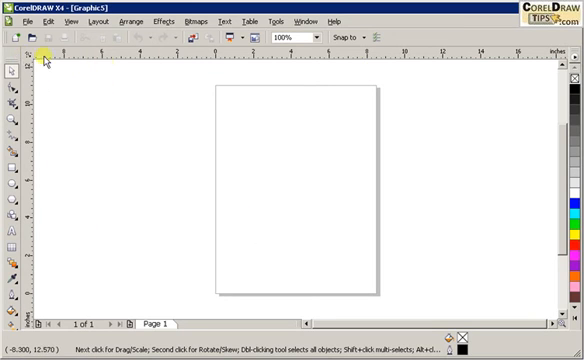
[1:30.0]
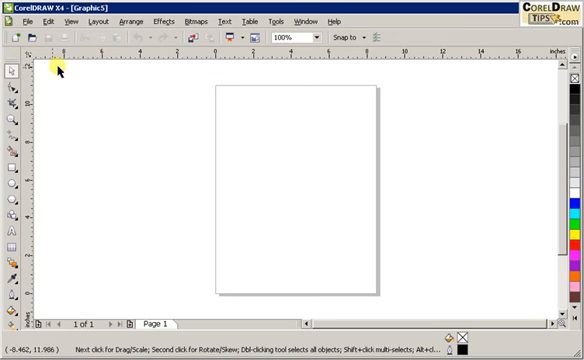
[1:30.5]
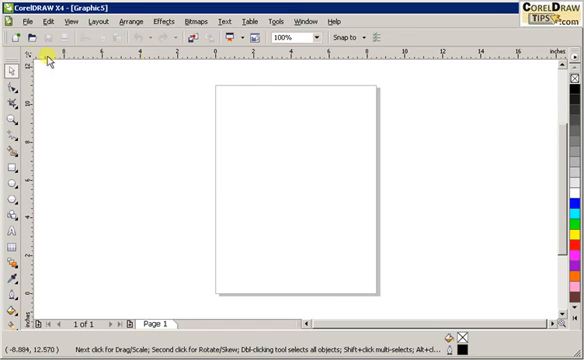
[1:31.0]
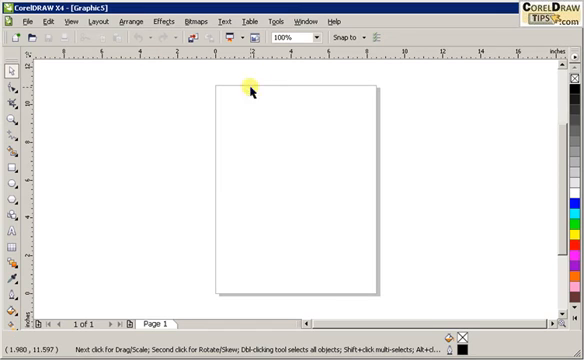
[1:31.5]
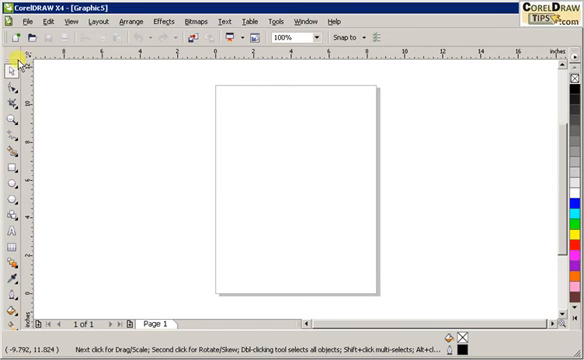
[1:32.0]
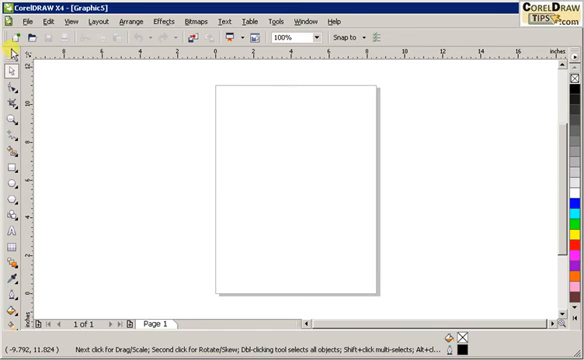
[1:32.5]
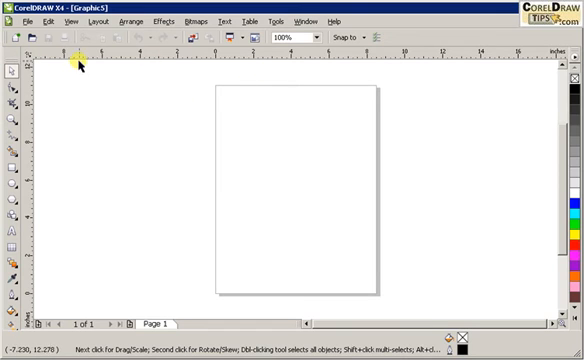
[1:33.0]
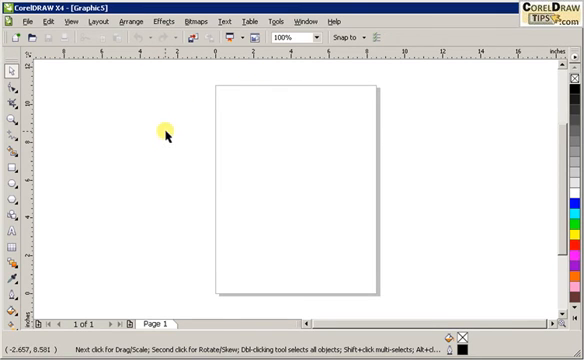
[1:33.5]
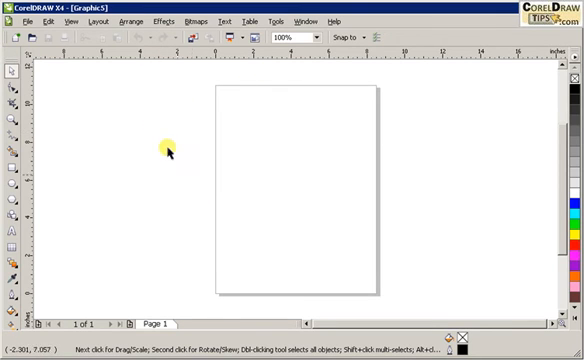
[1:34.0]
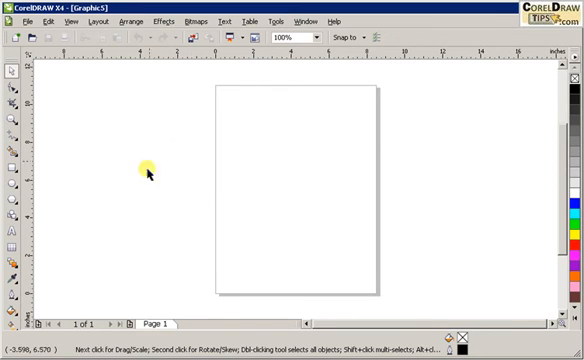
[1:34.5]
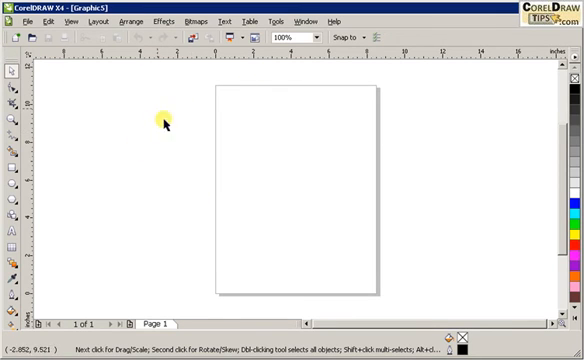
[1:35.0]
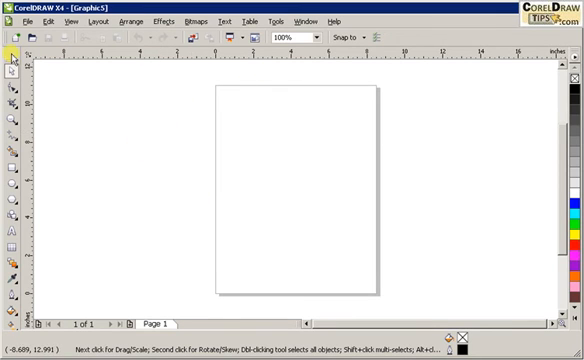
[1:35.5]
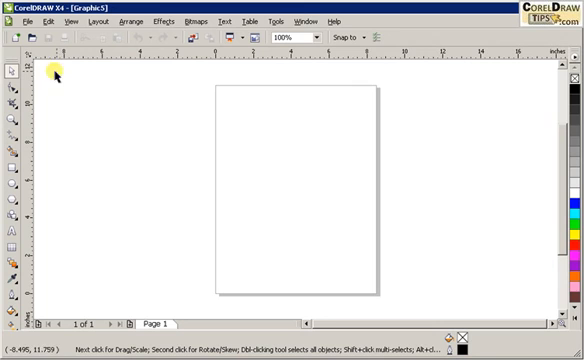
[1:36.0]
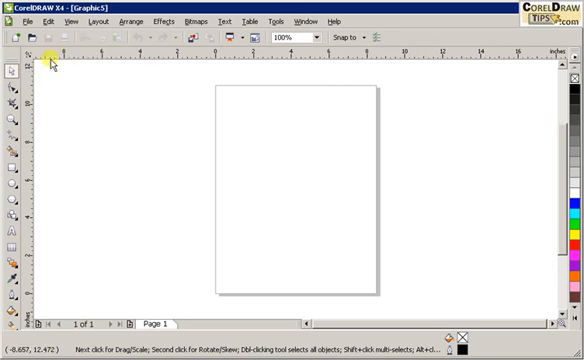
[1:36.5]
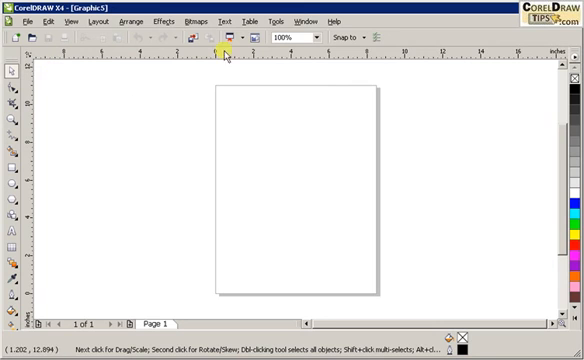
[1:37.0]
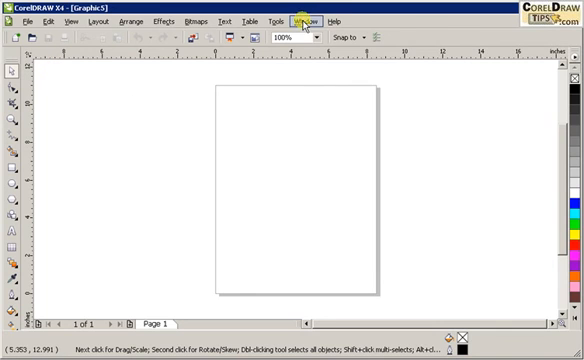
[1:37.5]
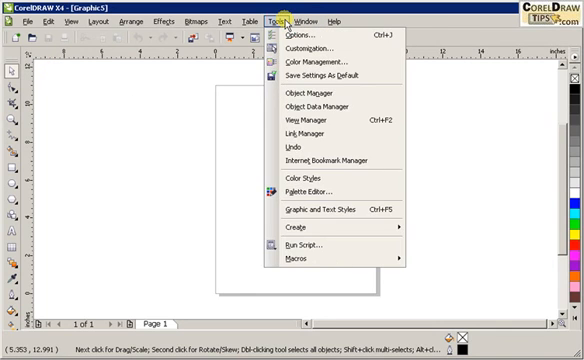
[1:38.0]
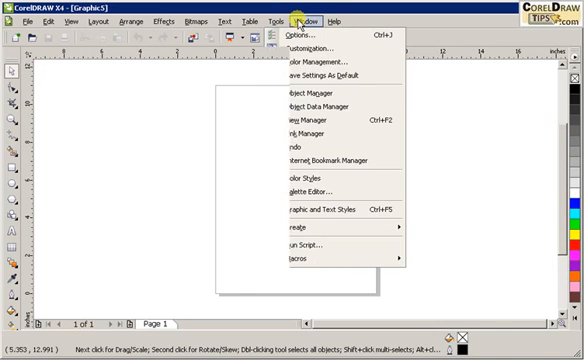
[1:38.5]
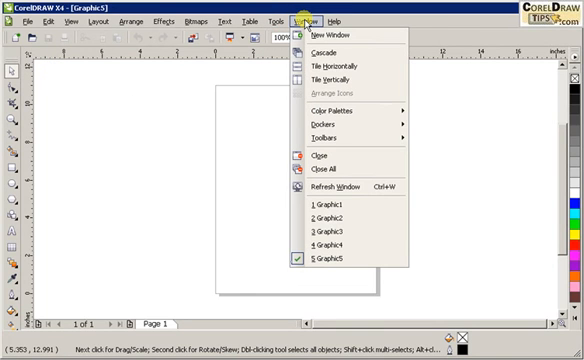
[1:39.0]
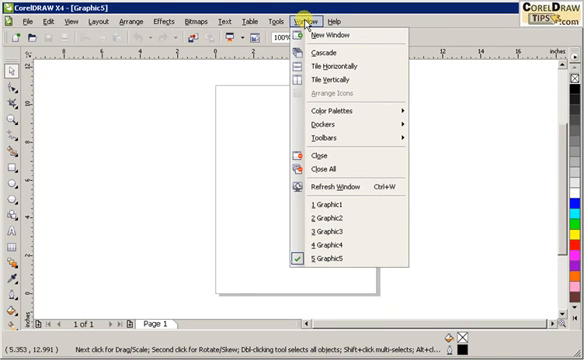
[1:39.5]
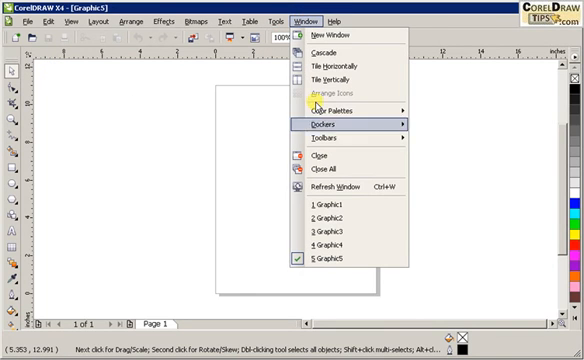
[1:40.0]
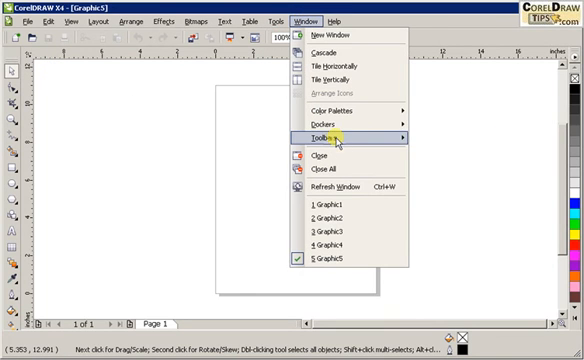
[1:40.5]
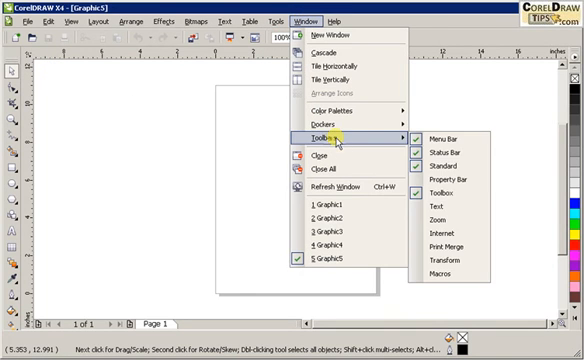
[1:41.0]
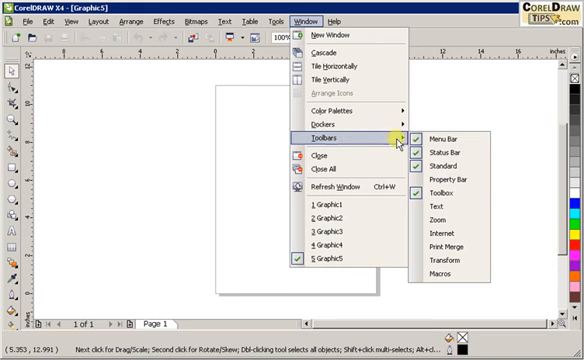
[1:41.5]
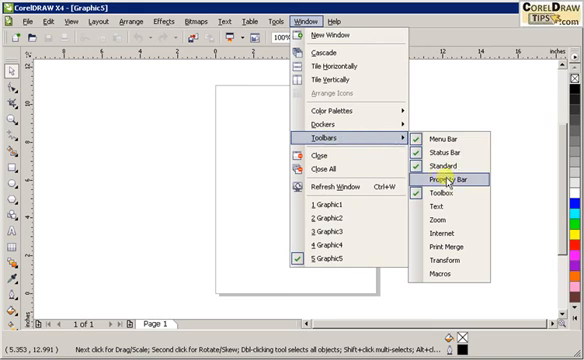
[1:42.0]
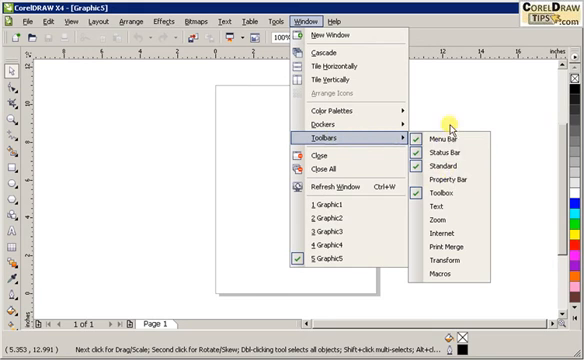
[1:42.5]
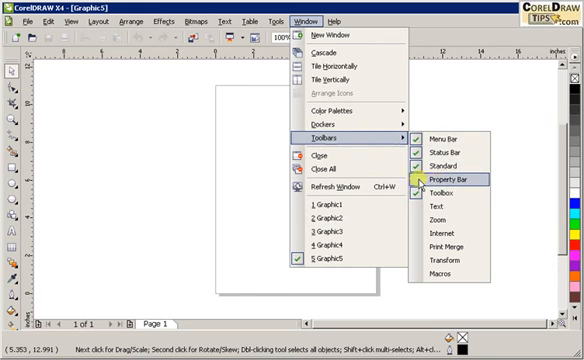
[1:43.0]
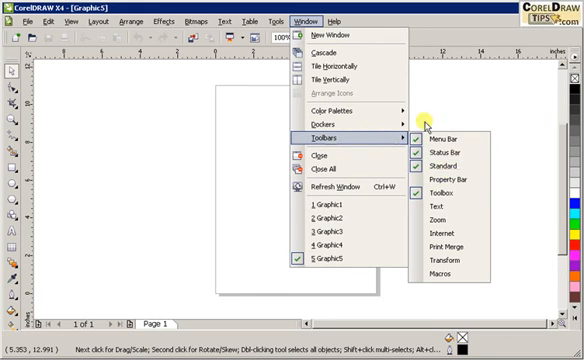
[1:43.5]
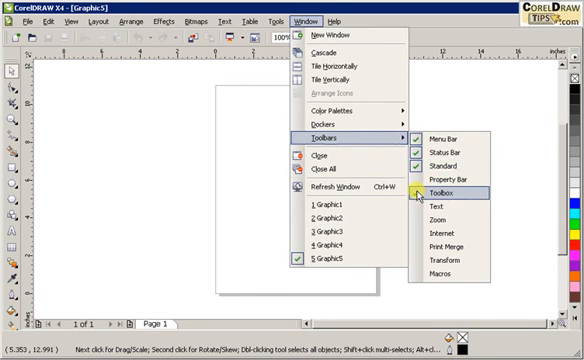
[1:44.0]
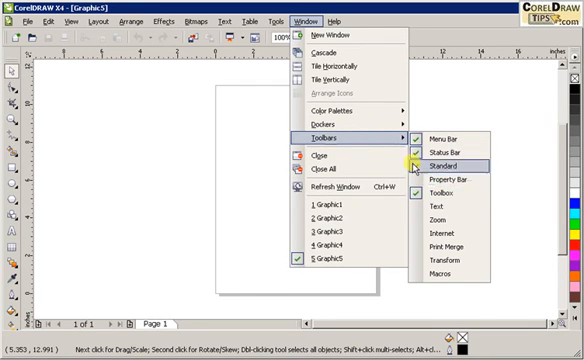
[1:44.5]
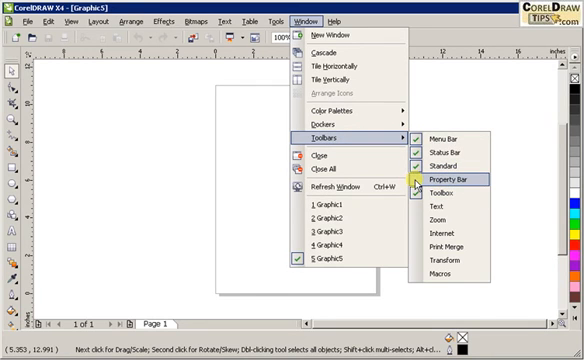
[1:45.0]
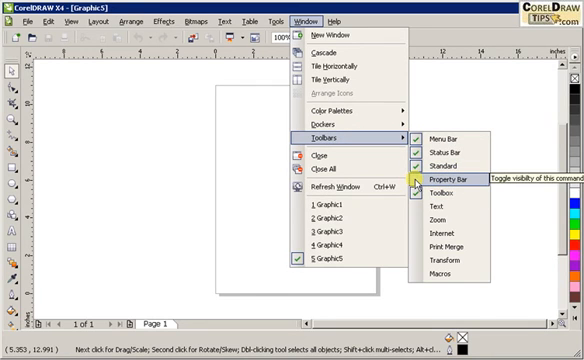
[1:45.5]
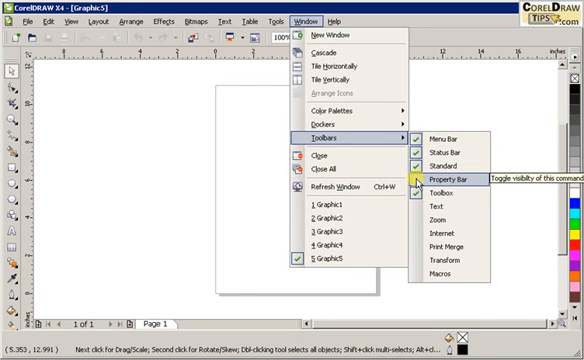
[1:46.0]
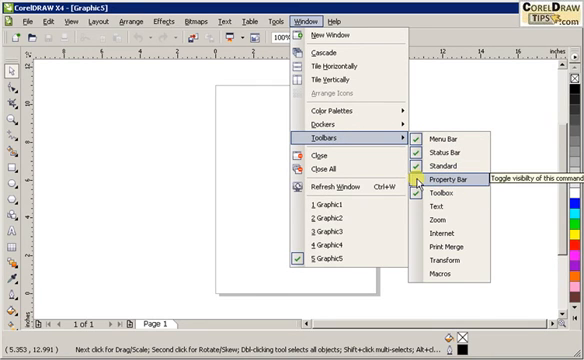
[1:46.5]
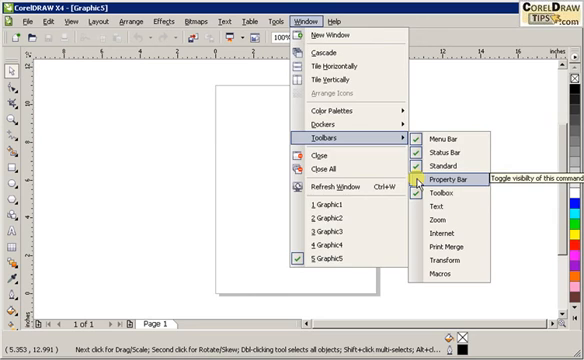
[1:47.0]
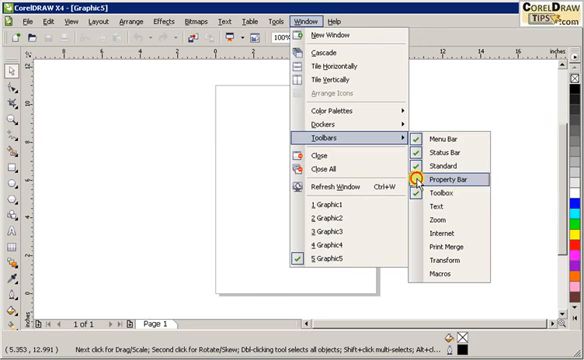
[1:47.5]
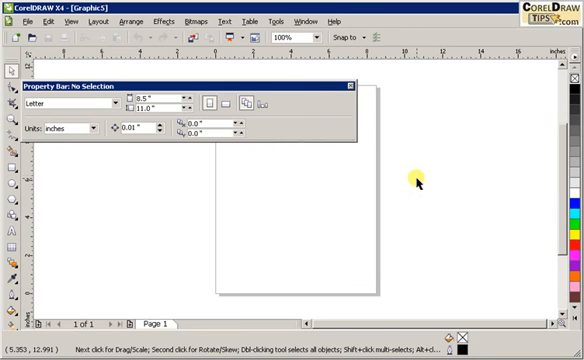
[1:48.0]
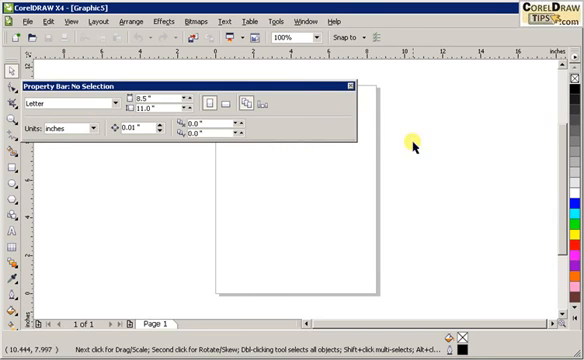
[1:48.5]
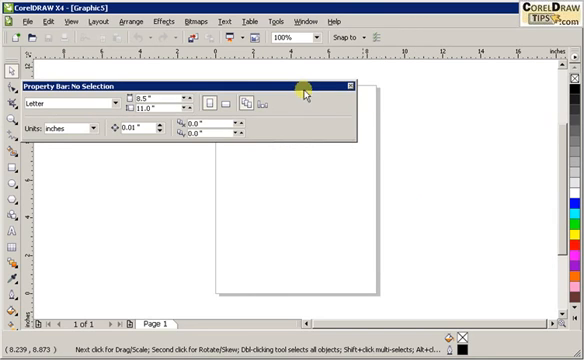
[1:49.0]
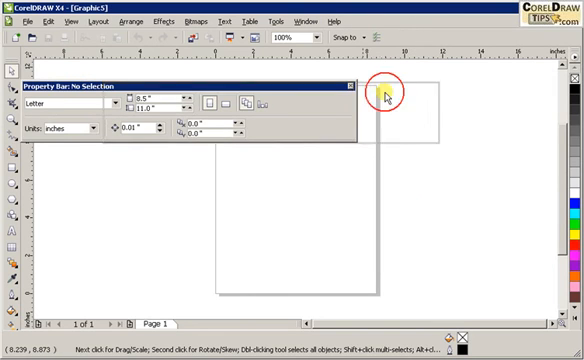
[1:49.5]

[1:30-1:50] The cursor moves across the horizontal and then waves around the left center of the screen, appearing to spin around randomly. It goes to "Tools" on the top menu, between "Table" and "Window"; the yellow tip circle is outlined with a larger red circle, and it clicks, opening a dropdown menu with a number of options. It then moves over to "Window", still with the yellow circle at its tip, and clicks, bringing up various options. The cursor moves down to click "toolbars" about halfway down the list, which brings up another bar to the right. In its left column there are green ticks in boxes beside "menu bar", "status bar" and "standard"; "property bar" has no box and no tick; and a box with a tick sits beside "toolbox". Below toolbox there are no more boxes or ticks, but the options "text", "zoom", "internet", "print", "merge", "transform" and "macros" run to the bottom. The cursor moves up and down these options before resting in the space between the boxes and green ticks beside property bar, and text appears to the right of property bar reading "toggle visibility of this command".